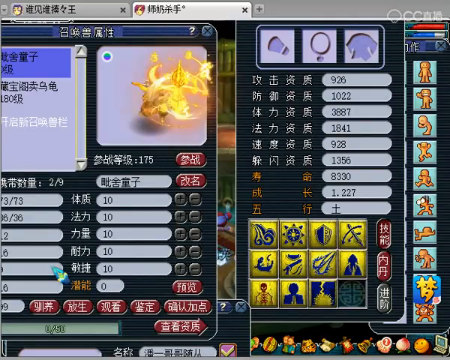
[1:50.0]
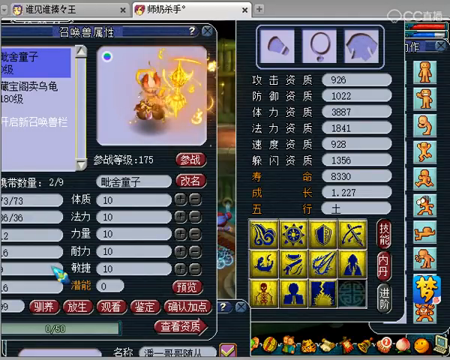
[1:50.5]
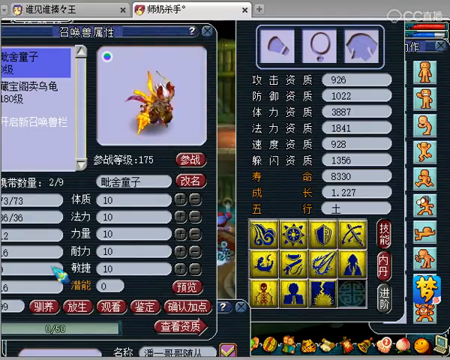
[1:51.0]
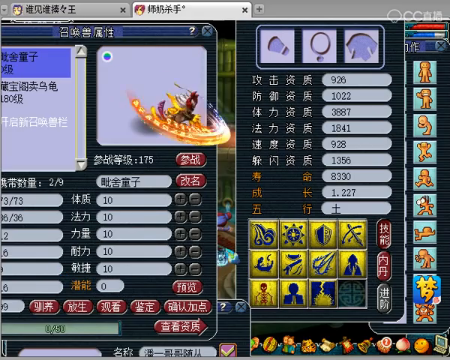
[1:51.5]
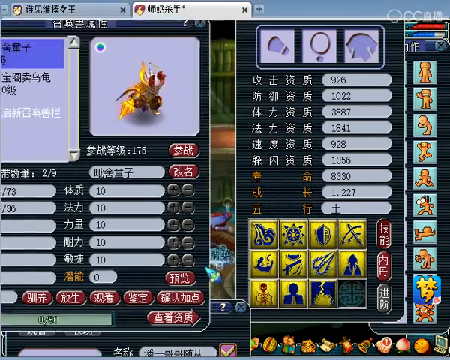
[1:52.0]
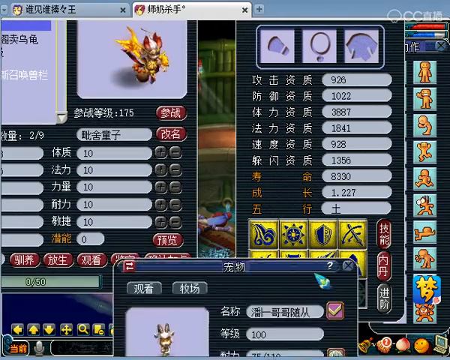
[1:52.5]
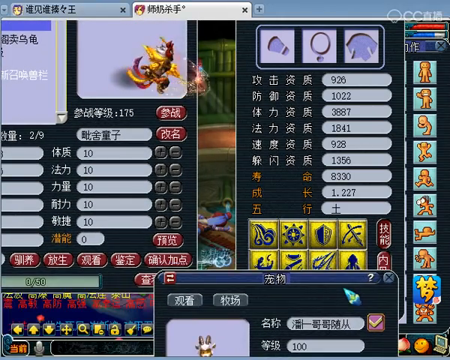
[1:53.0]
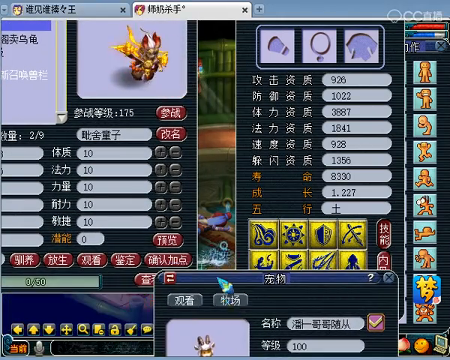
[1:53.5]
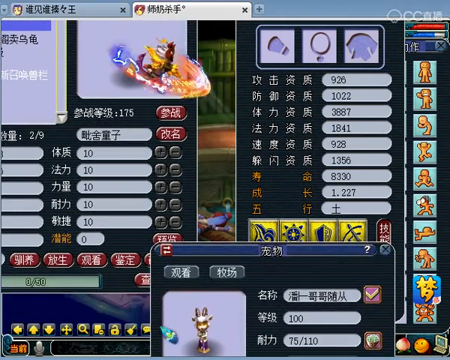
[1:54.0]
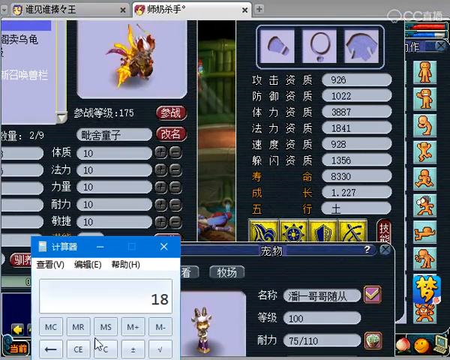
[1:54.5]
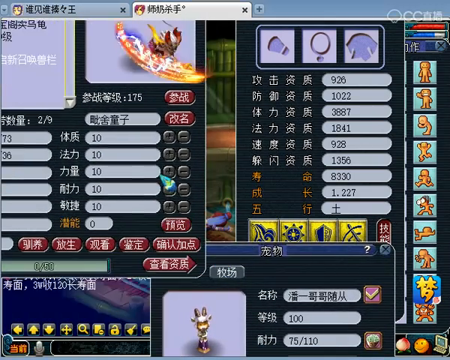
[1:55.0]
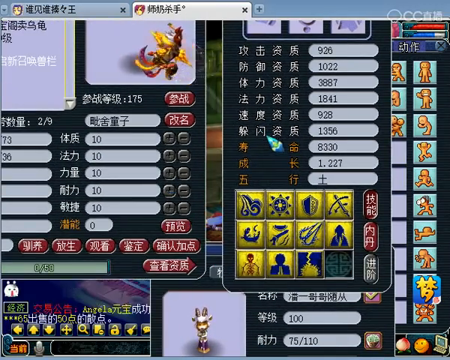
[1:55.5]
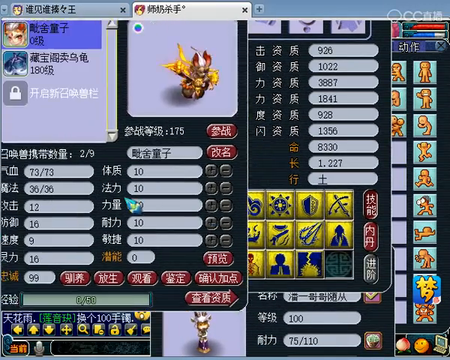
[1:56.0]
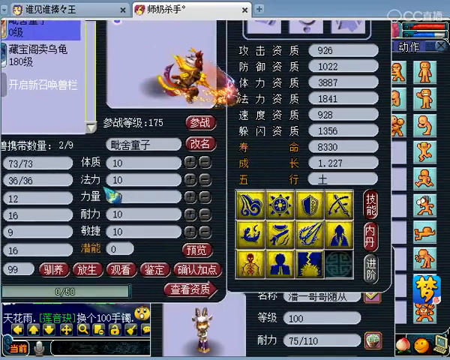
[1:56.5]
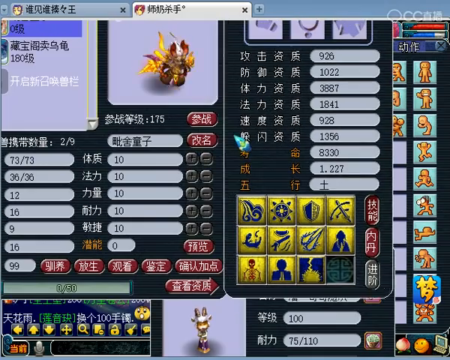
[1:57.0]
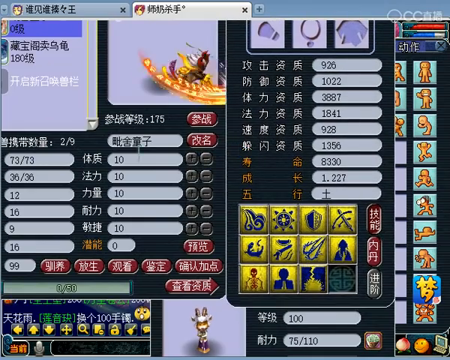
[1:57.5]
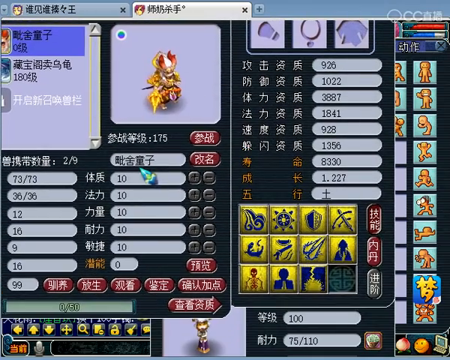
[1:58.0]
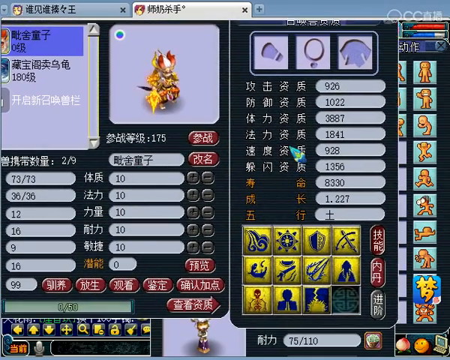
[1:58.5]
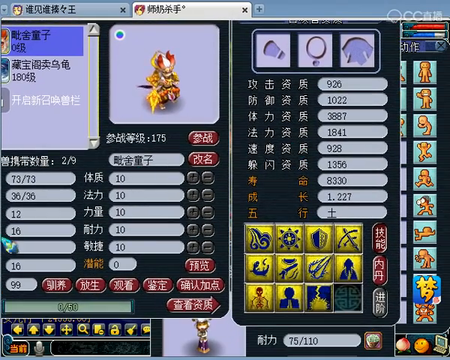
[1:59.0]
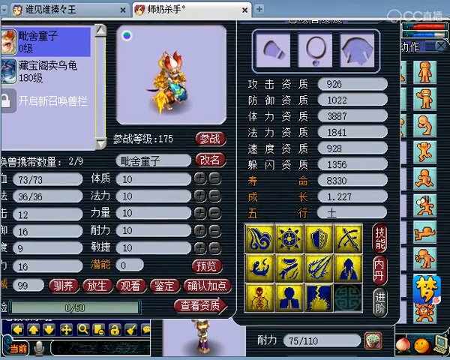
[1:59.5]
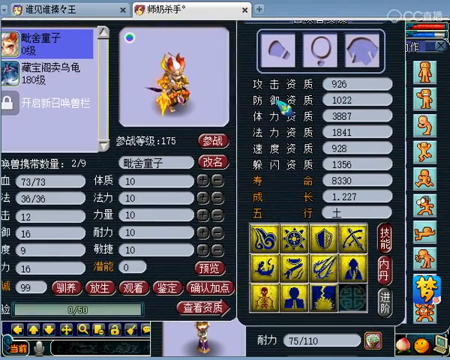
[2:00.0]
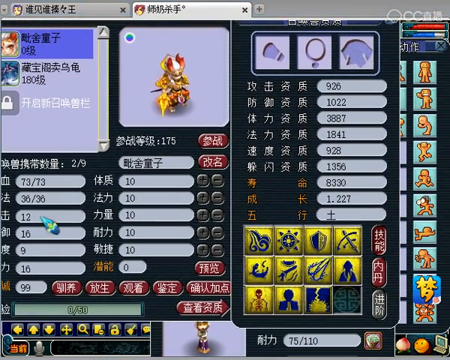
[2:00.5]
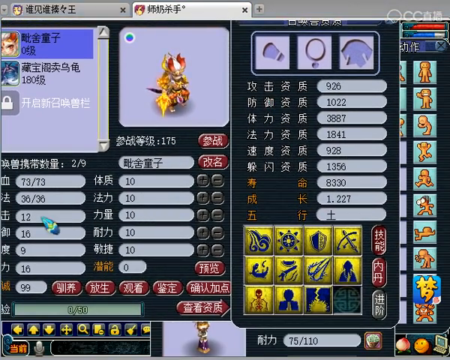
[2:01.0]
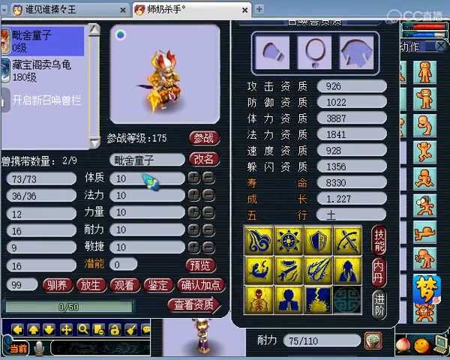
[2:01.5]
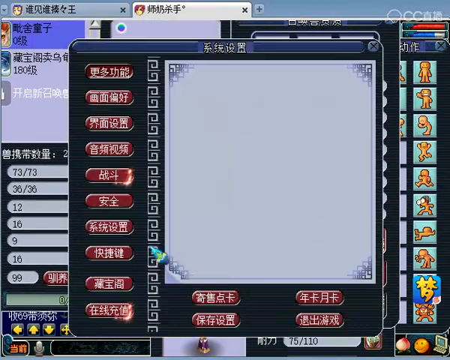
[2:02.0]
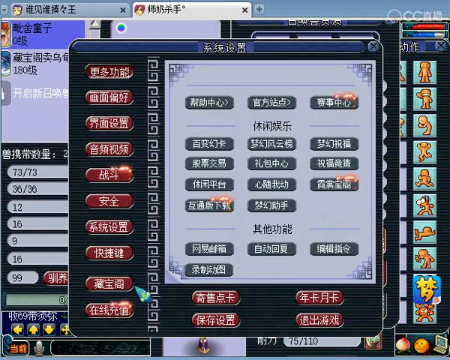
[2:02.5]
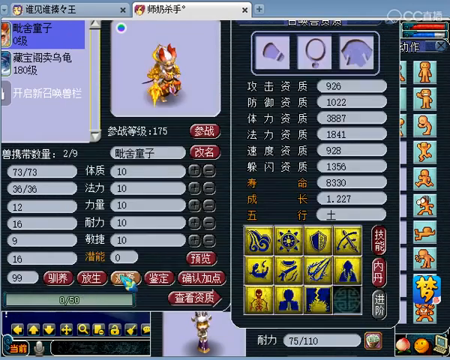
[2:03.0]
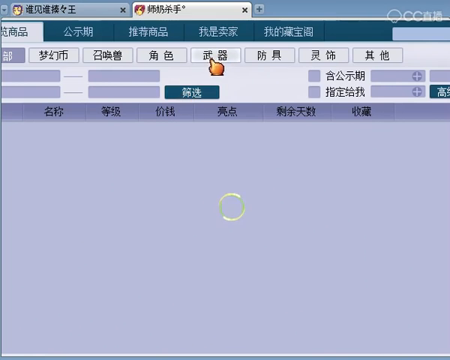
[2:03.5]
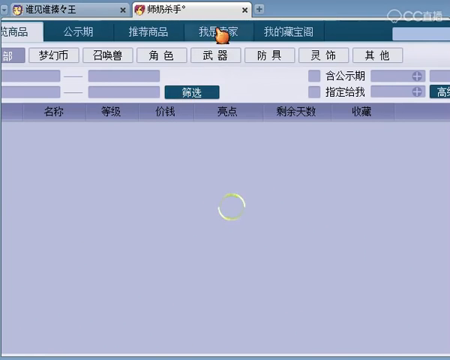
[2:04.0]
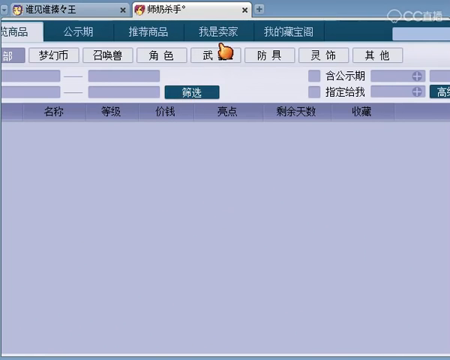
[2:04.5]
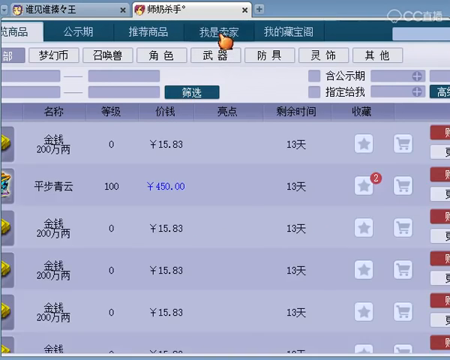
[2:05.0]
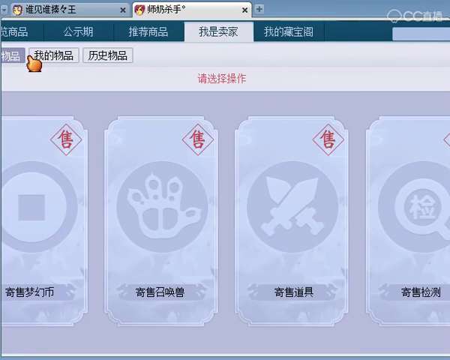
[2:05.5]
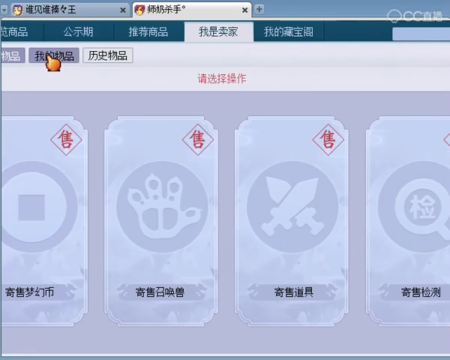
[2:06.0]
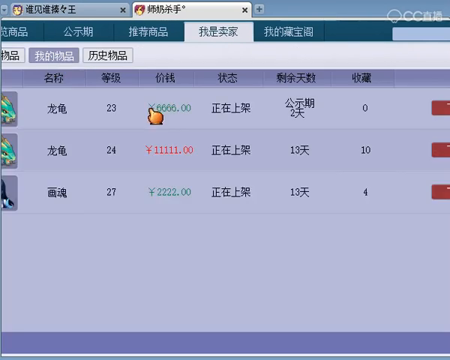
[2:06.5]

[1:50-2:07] The player looks further at the red-helmeted creature, which plays an animation over and over, slicing with a fiery spear to its right and creating a trail of fire. It wears bulky red pants or red armor, and appears to have golden armor on its upper part. The player then goes to a menu that almost looks like a browser but seems to be a shop screen for in-game currency. A couple of items appear to be on sale there, apparently purchasable with yen, in what looks like a microtransaction menu for buying in-game items with real money.